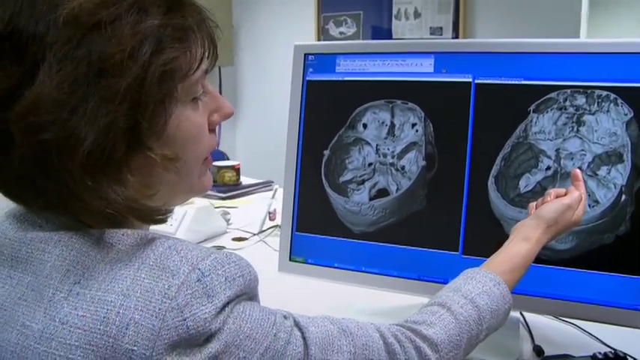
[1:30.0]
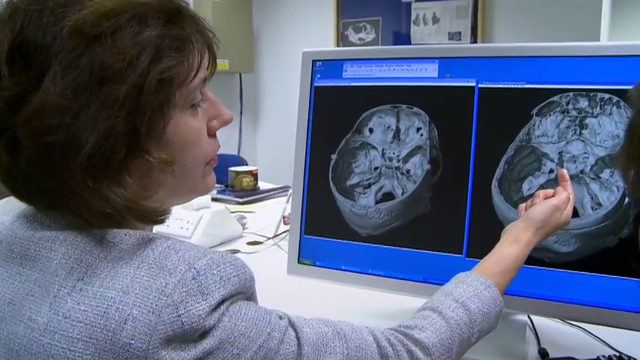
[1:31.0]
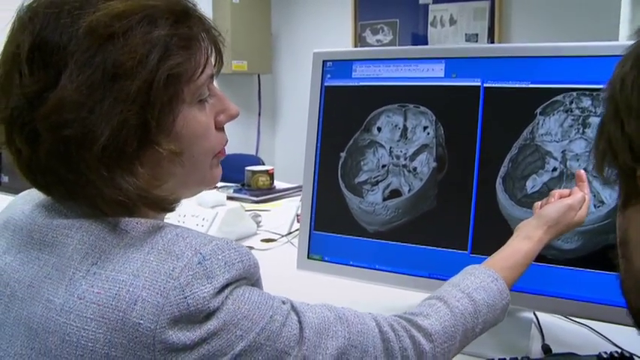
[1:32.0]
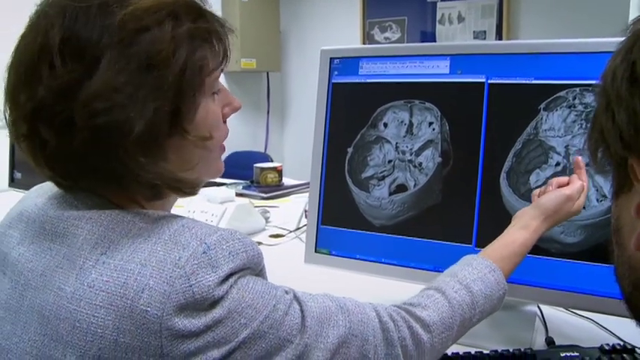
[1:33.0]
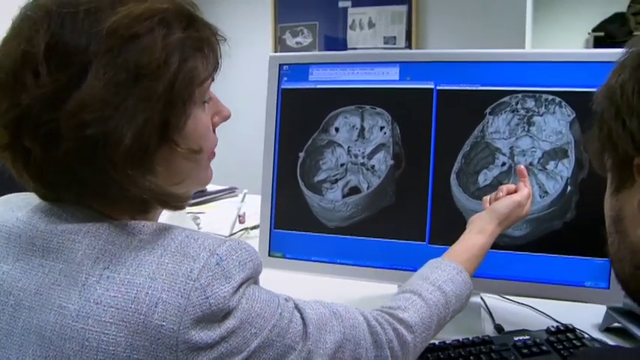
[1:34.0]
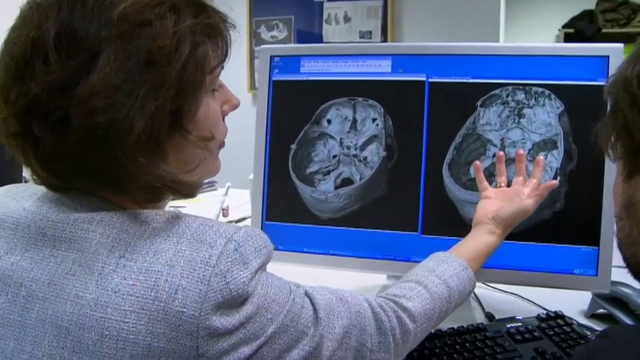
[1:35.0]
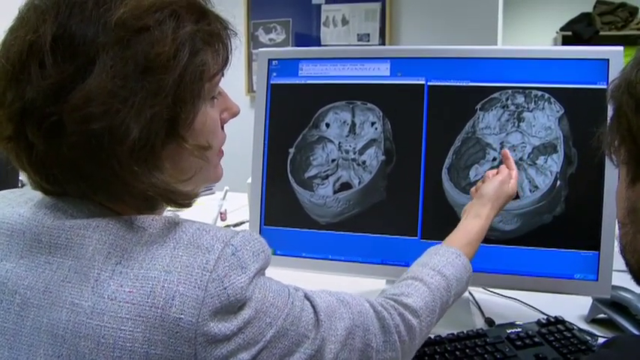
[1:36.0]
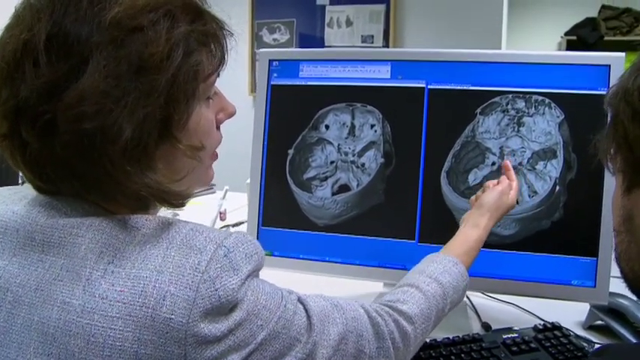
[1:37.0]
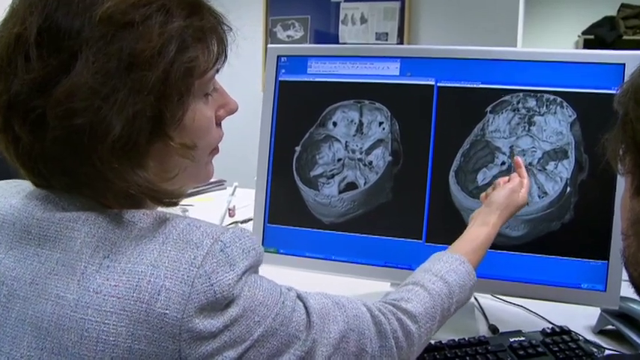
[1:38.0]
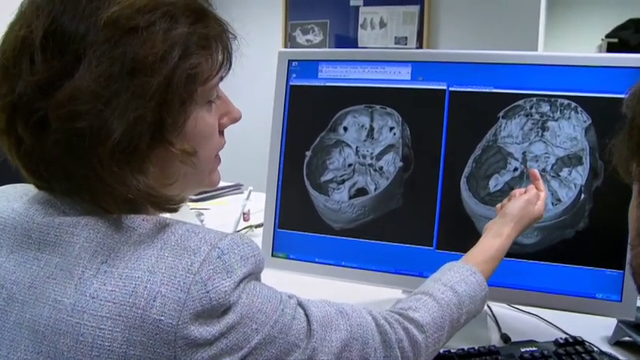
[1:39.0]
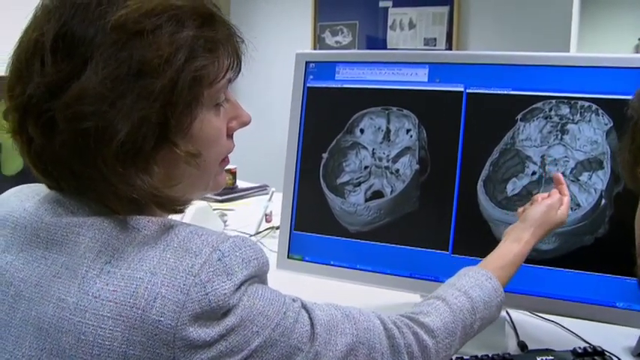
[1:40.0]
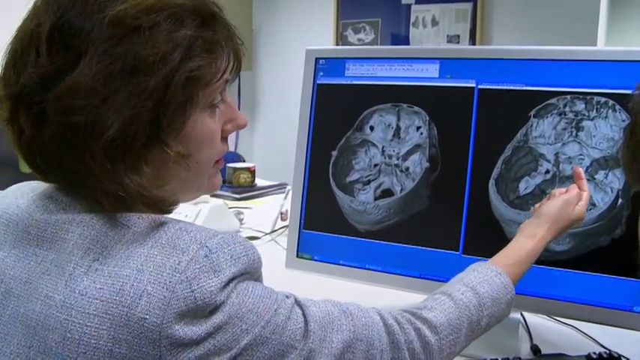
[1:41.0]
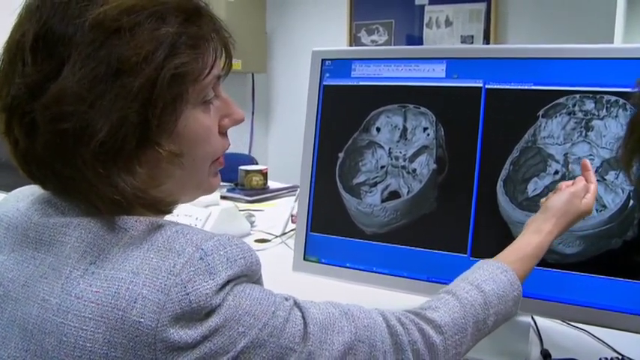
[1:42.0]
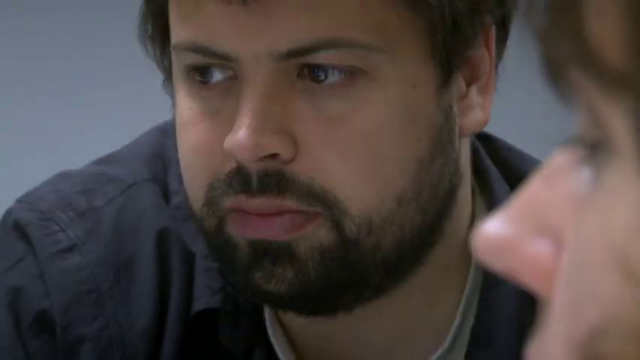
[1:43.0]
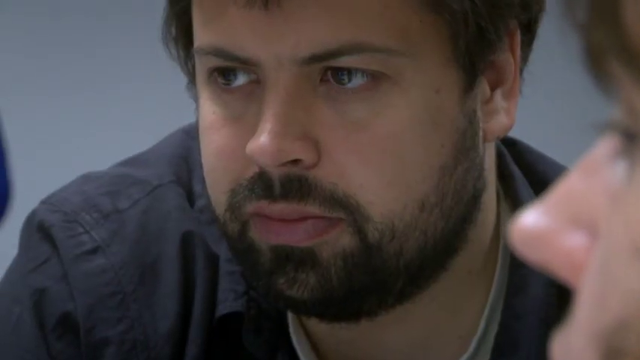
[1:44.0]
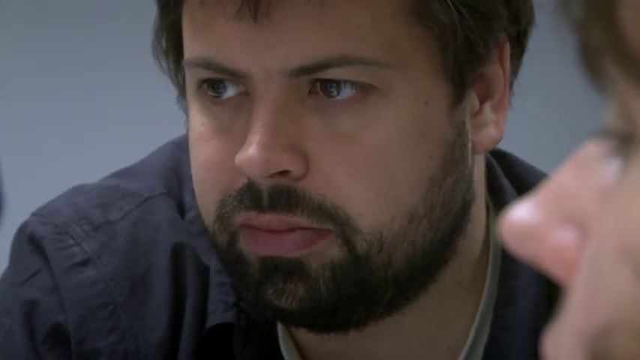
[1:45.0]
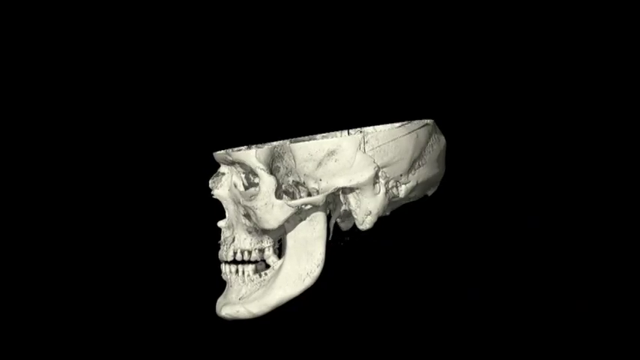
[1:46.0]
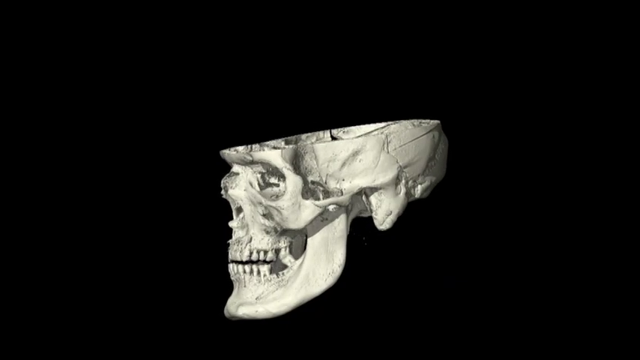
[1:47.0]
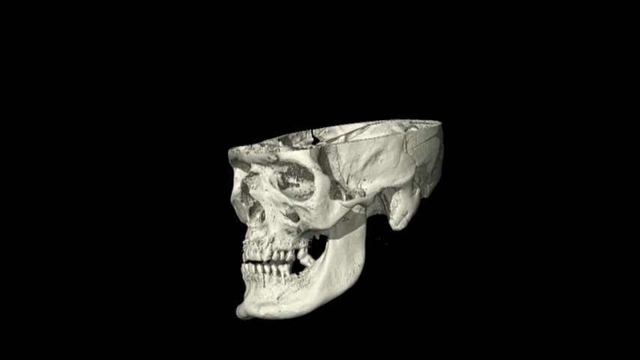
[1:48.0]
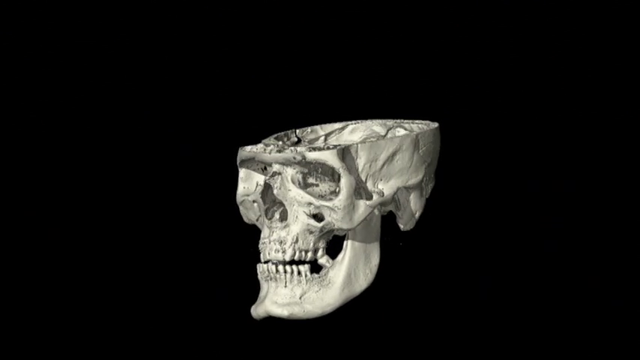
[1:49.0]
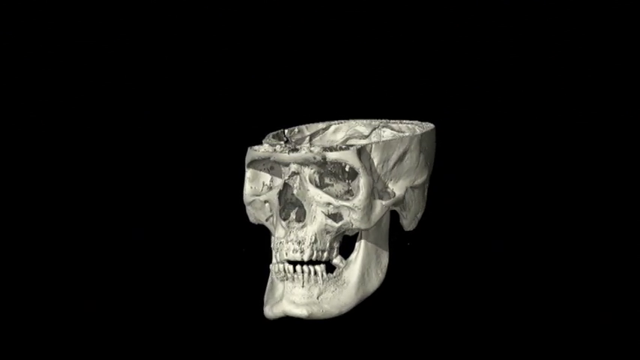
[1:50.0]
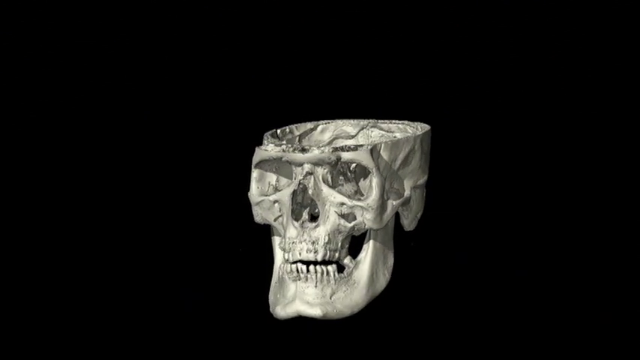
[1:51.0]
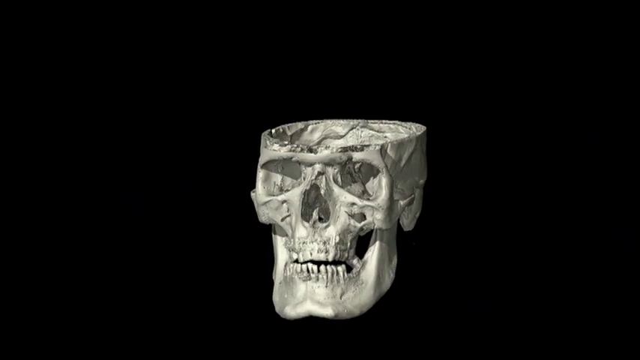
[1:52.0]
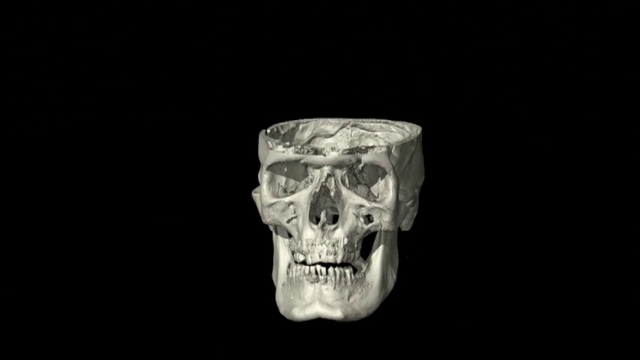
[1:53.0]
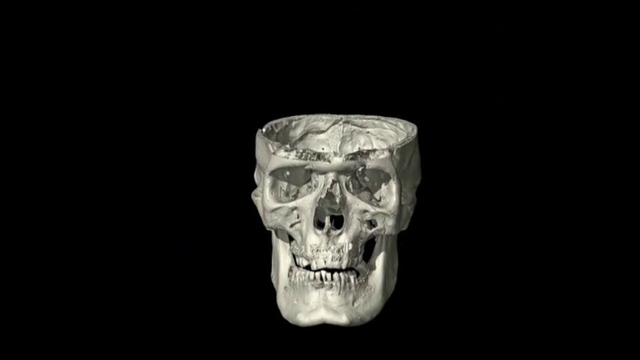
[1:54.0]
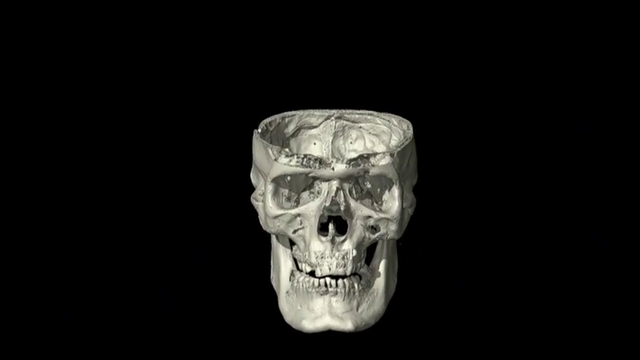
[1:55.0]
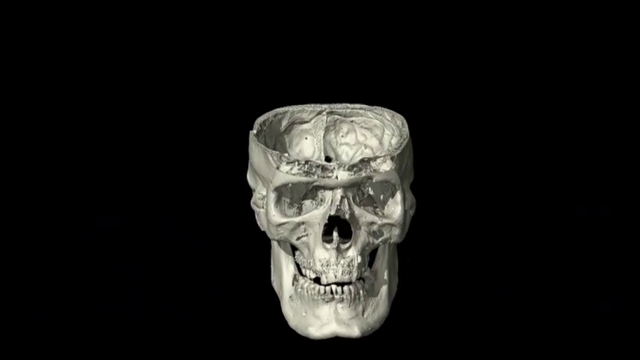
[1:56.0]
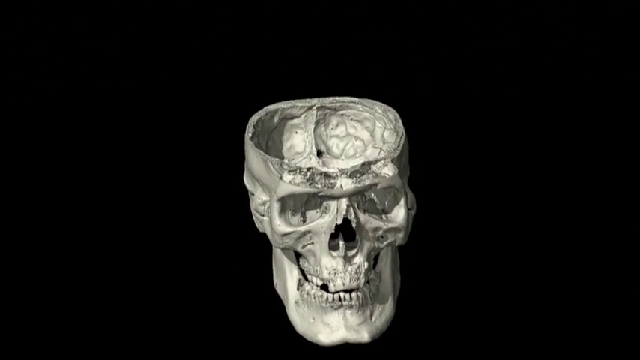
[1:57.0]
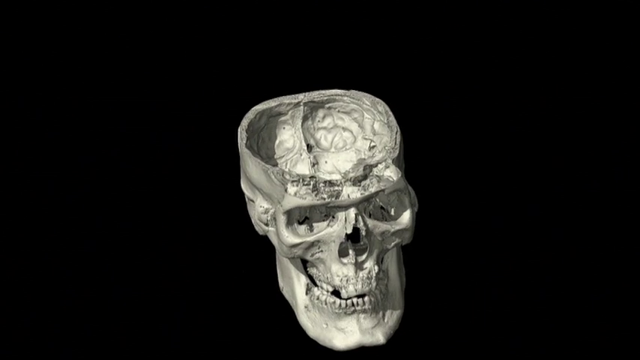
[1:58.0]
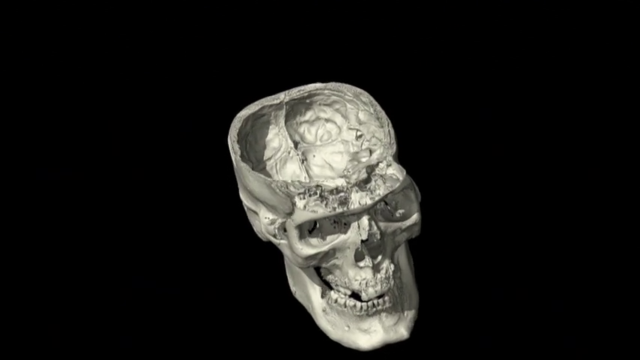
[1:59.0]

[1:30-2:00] The woman points her finger toward the camera and makes a kind of circling motion on the center of the right-side image. The view goes to a close-up of the man's face as he watches the computer screen and looks at the images. He has kind of a serious look on his face, longer brown hair and a brown beard, and appears focused on the image. The bottom part of a human skull then appears on the screen, showing the jaw and the teeth. The skull appears to be white, on a black background, and is a digital image. It moves around, and the view moves toward the top part of the skull, which is what the two have been looking at the entire time; from the top it almost looks like a bowl.